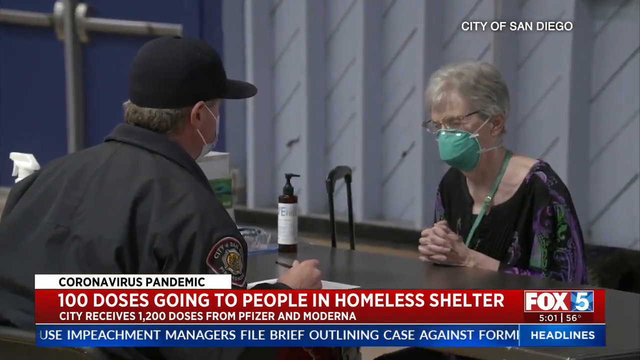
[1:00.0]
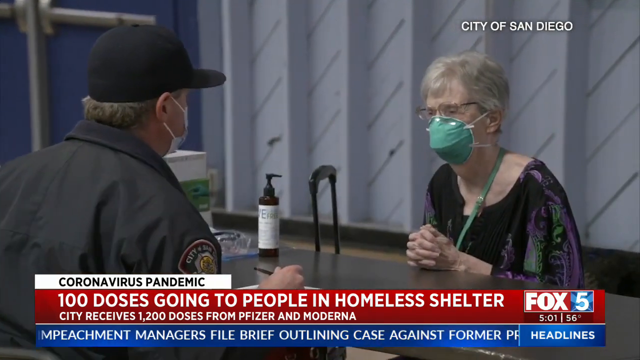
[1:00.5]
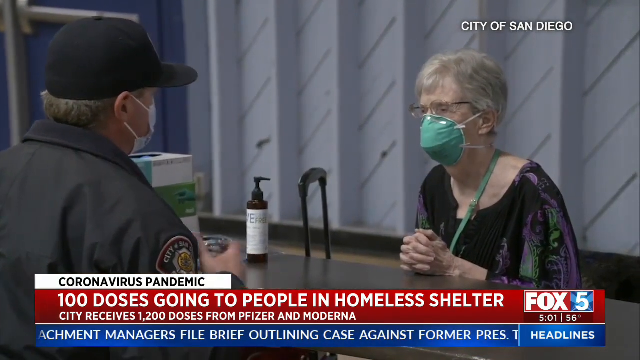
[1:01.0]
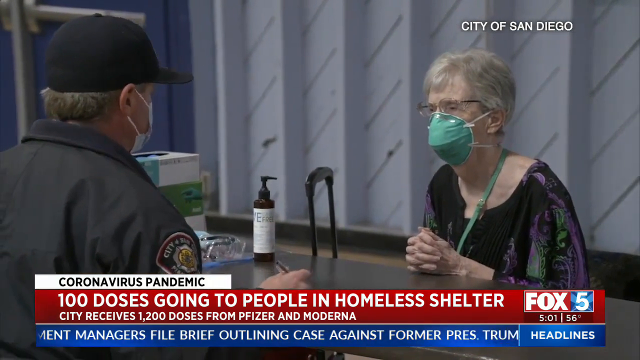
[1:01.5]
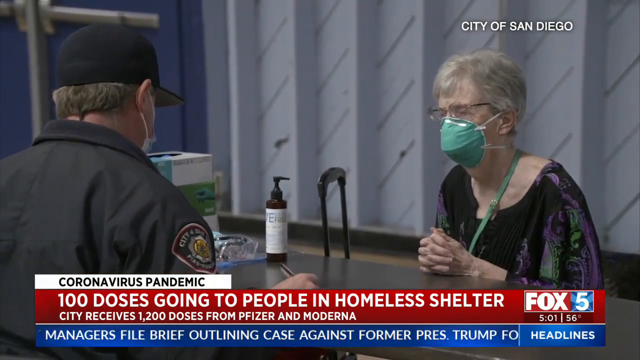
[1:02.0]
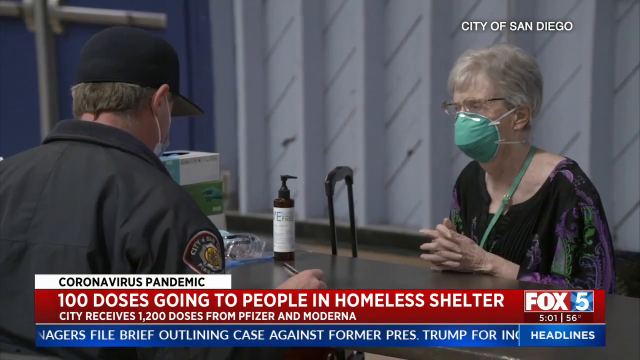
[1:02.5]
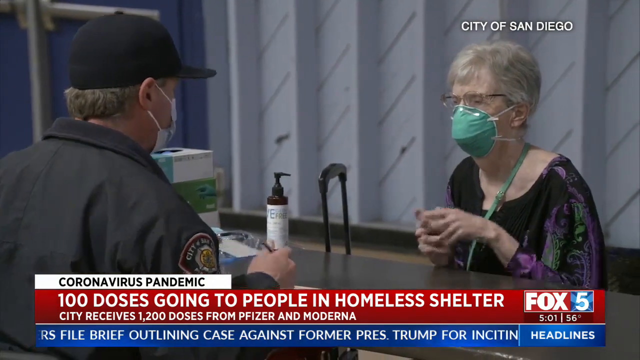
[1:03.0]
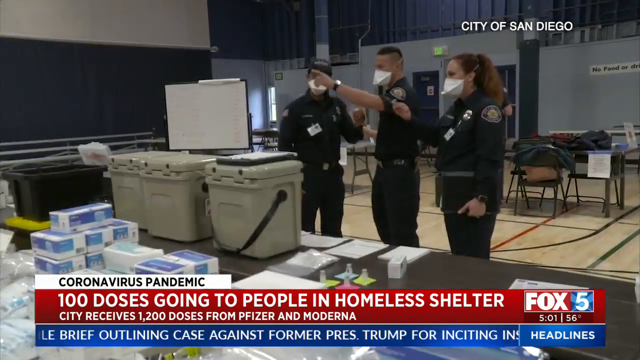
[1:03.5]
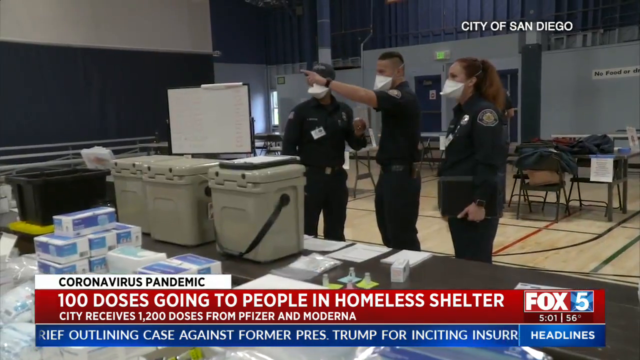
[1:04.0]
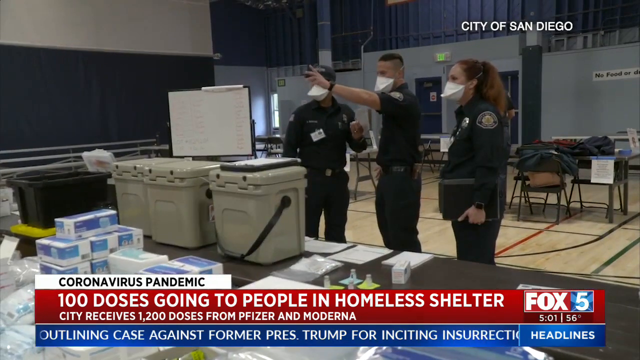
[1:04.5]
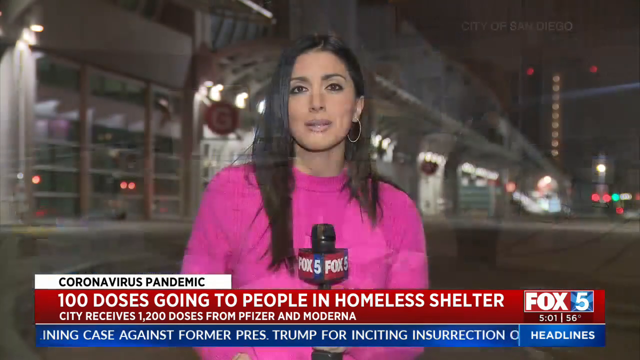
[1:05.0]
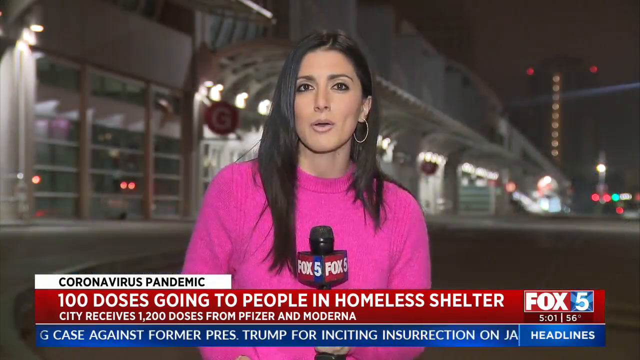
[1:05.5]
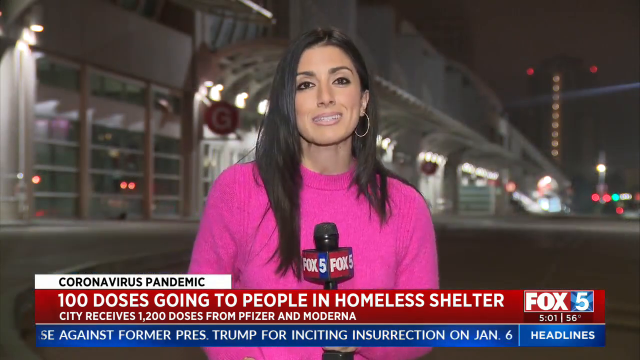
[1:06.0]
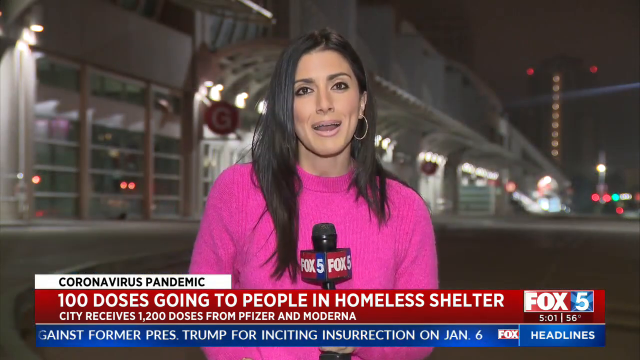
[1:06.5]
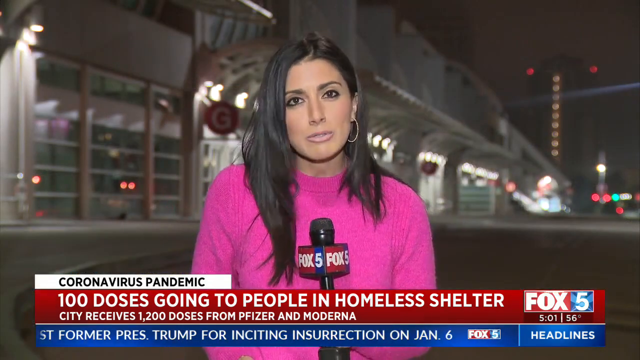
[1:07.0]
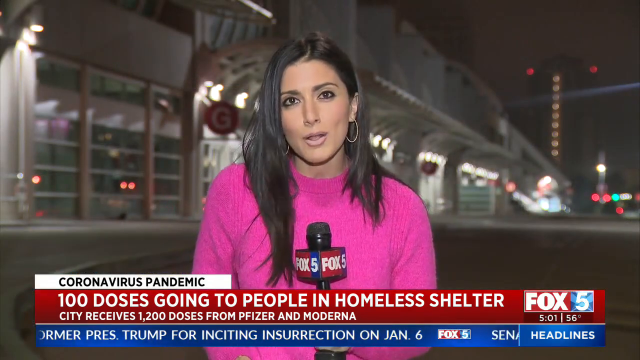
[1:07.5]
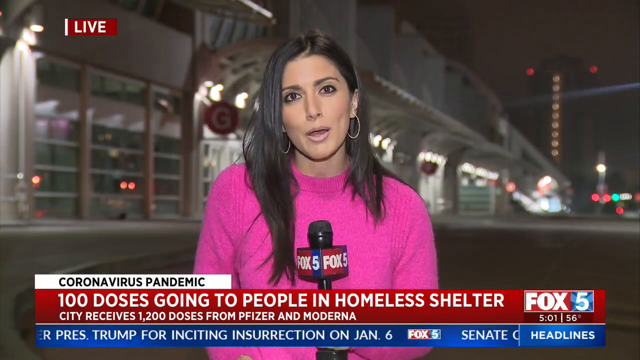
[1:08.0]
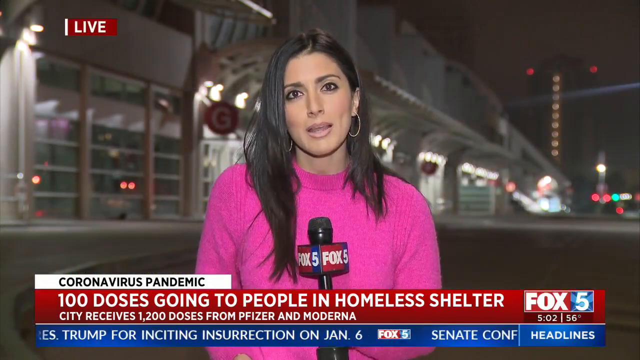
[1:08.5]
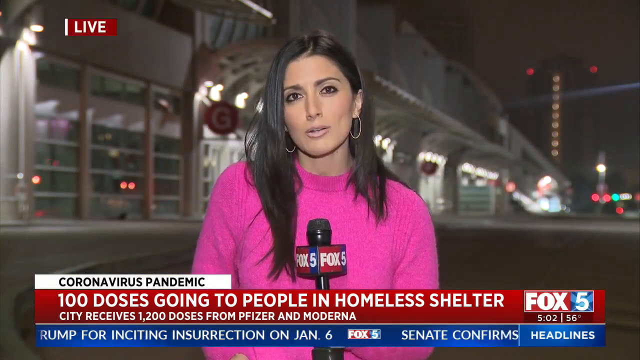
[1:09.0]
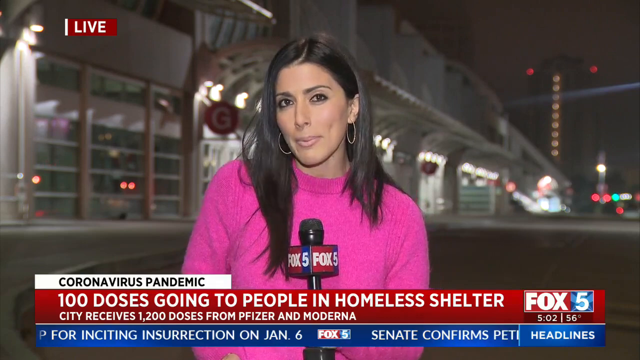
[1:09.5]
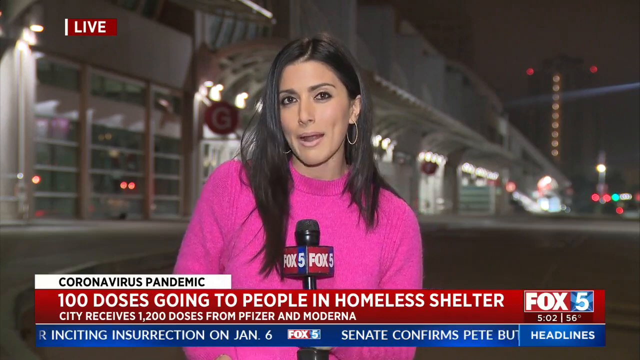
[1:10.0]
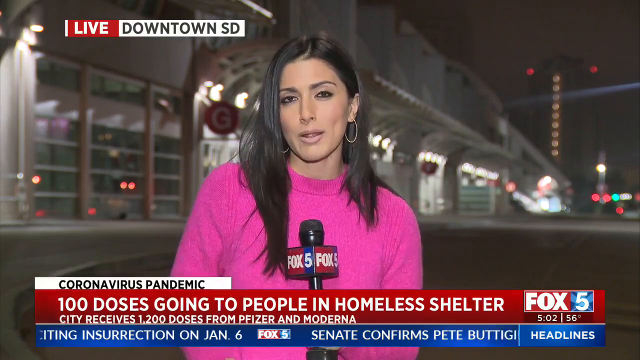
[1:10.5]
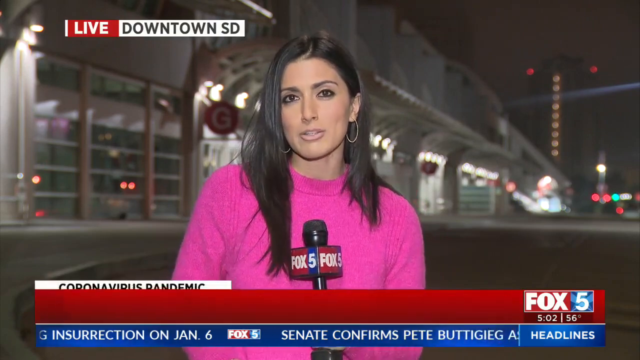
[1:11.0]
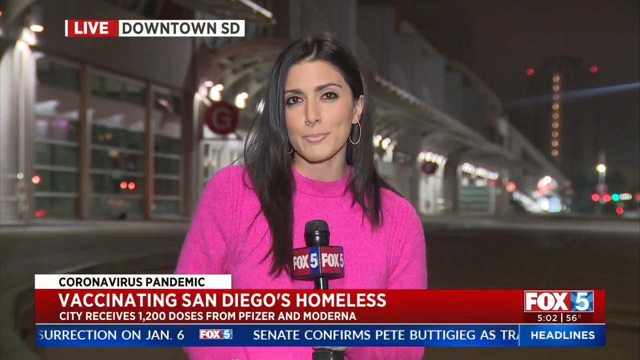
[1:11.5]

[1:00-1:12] The elderly white woman is seated at a table inside the facility, and on the other side of the table is what appears to be a police officer offering her assistance. Three other police officials are in the same facility, seemingly directing people inside. The video then switches back to Jacqueline, still reporting live from downtown back to the studio, and the headline just below her changes to "vaccinating San Diego's homeless".